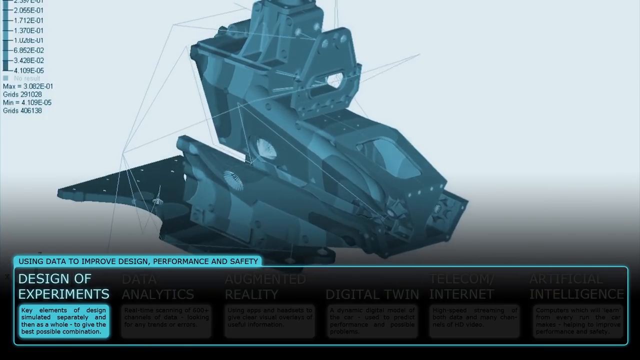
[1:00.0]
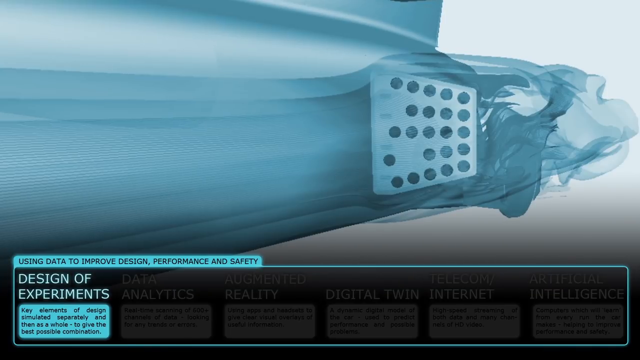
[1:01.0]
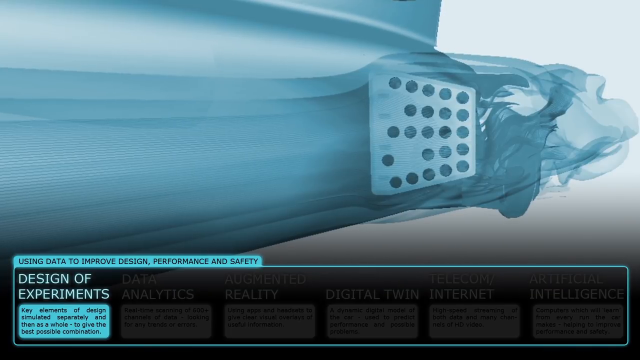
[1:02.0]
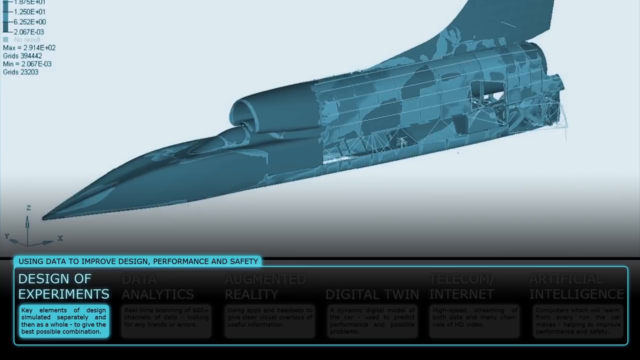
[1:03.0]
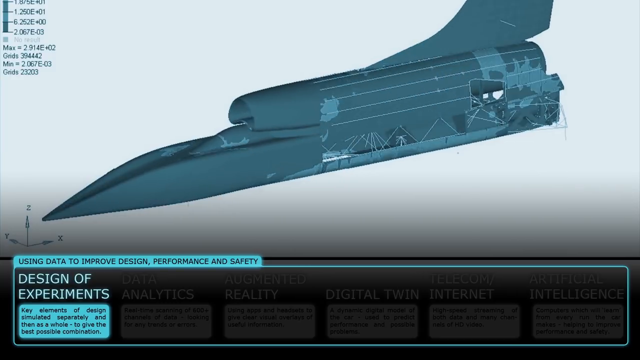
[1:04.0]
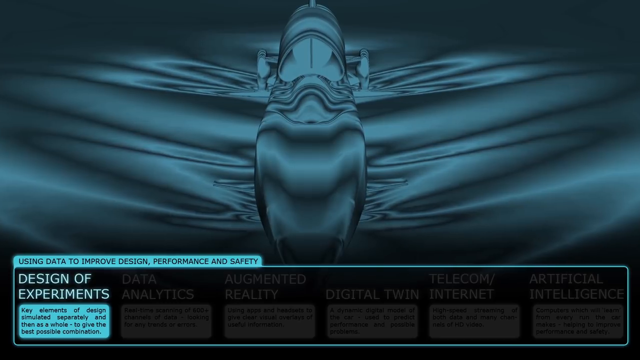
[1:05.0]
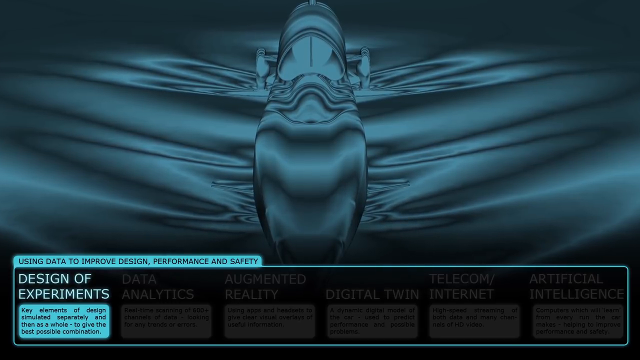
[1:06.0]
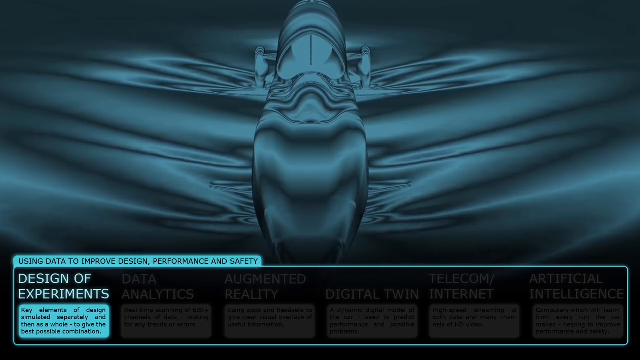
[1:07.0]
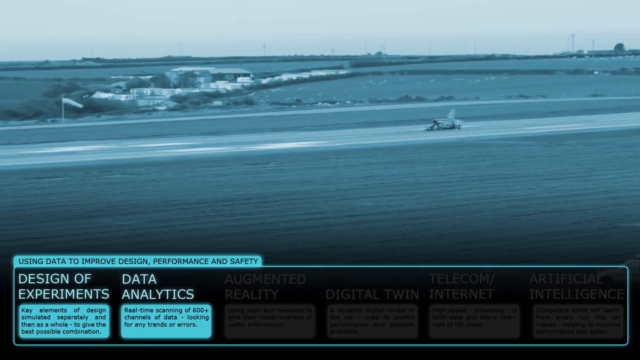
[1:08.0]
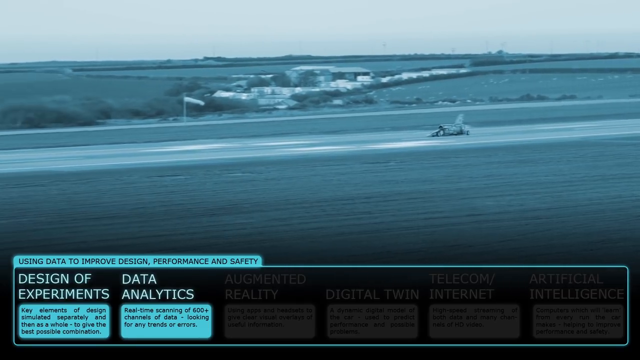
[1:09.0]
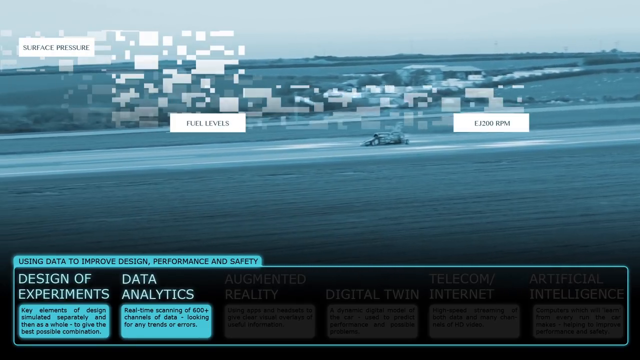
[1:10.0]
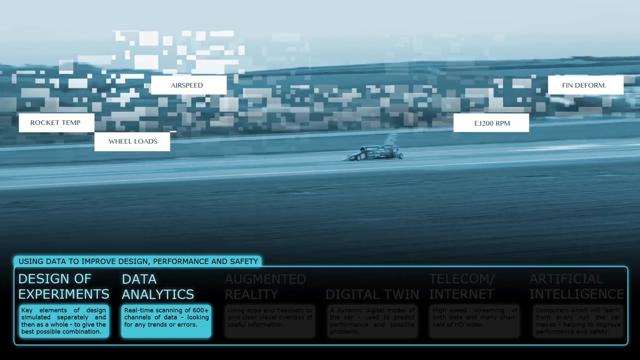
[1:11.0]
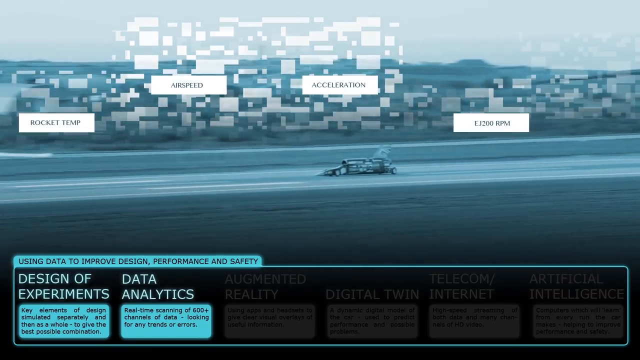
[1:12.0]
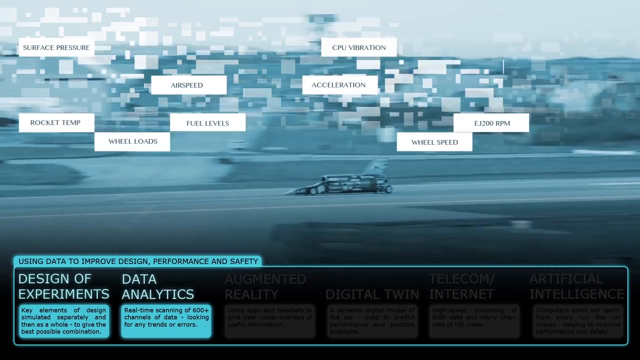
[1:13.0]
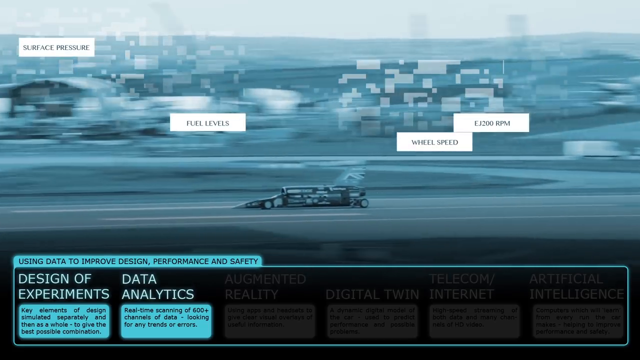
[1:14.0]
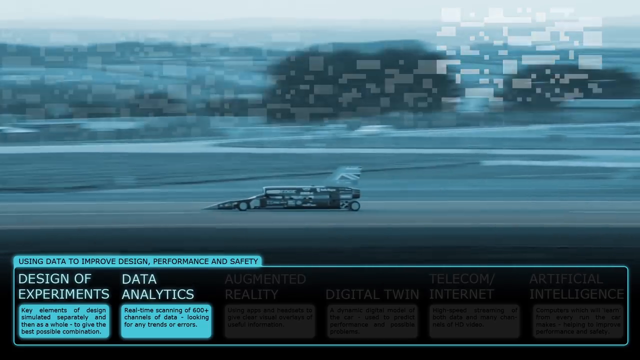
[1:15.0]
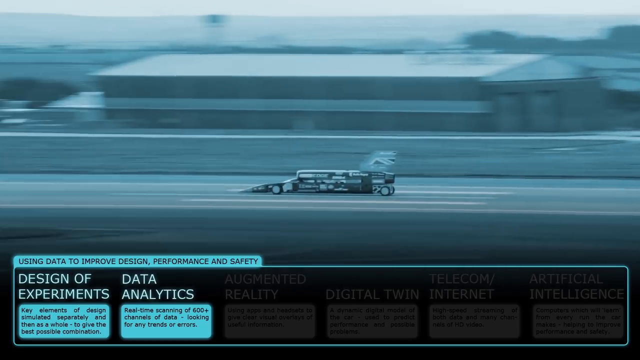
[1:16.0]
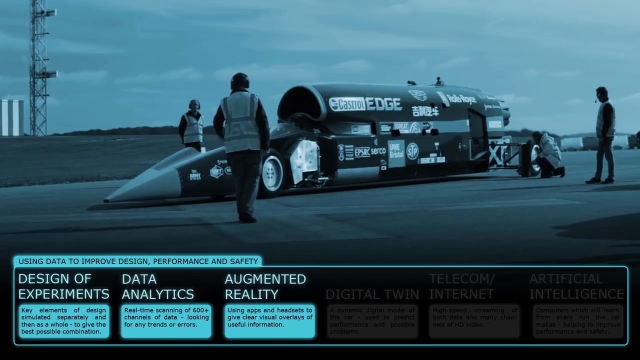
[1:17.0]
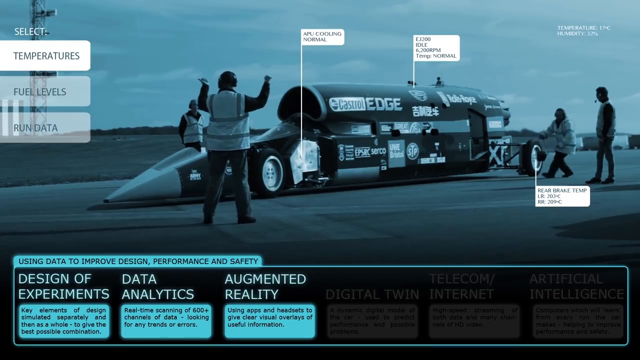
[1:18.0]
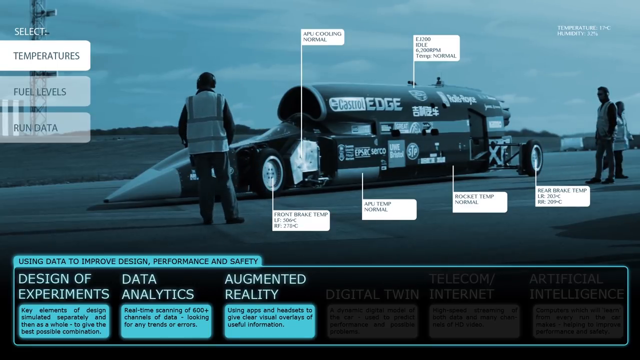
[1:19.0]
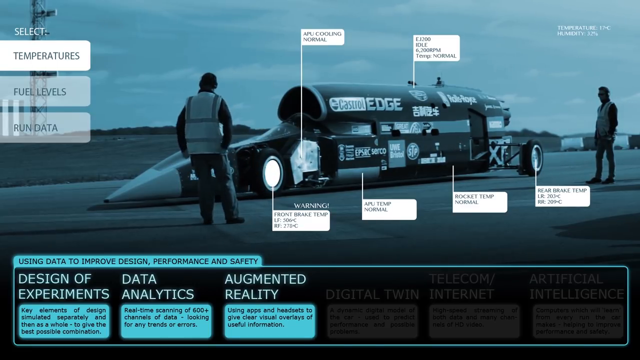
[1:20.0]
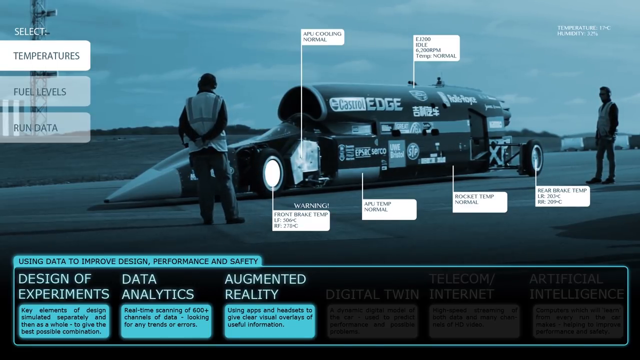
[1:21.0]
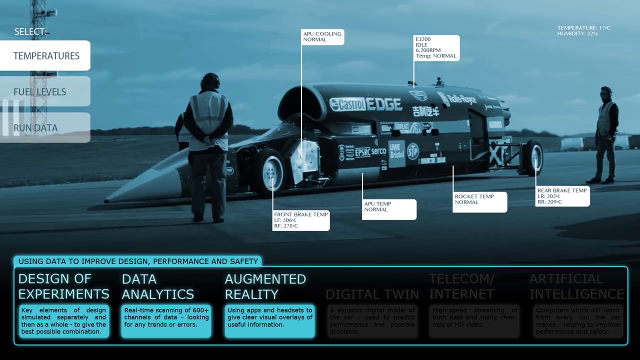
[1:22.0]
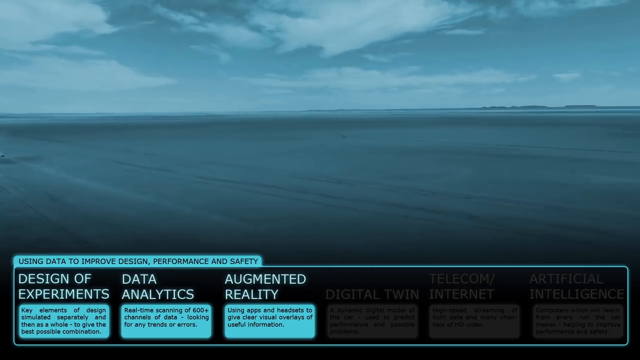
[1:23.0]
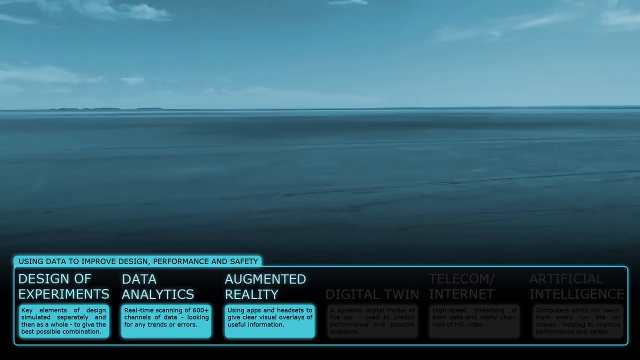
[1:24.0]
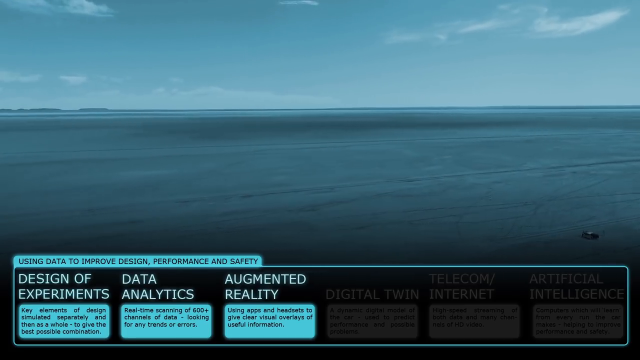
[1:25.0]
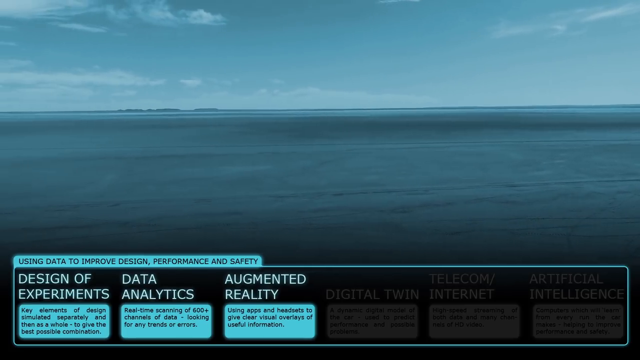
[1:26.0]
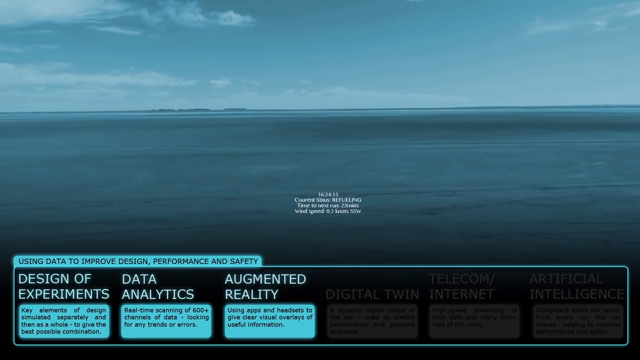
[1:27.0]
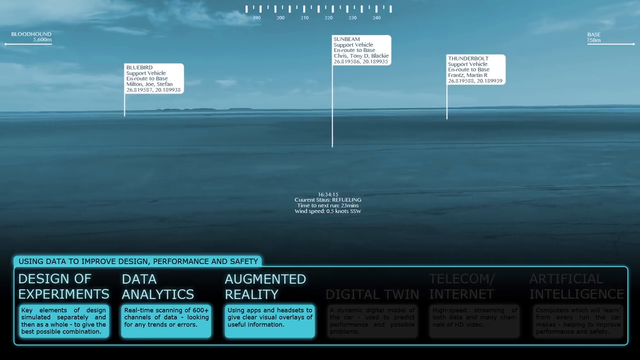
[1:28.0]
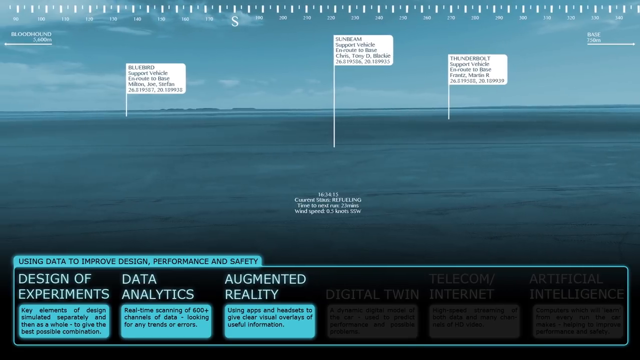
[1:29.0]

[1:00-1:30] An image of the rocket ship in dark blue-gray against a light gray background is shown from one angle, then twists to another, with mottled patterns moving along its side. Unlabeled numbers are in the top left, and below them are four labeled lines with words such as "max," "grid" and "min." At the bottom it says "using data to improve design performance and safety" and "design of experiments." The view shifts to a very futuristic-looking, very swirly image looking straight down at the rocket ship, possibly something like a heat map, while the text at the bottom stays the same. Then actual footage shows a rocket car going down a drag racing strip as white boxes appear at the top with text such as "fuel levels," "fin deform" and "wheel loads," more and more boxes appearing. Finally, a crew stands around a stationary rocket car, observing it closely.